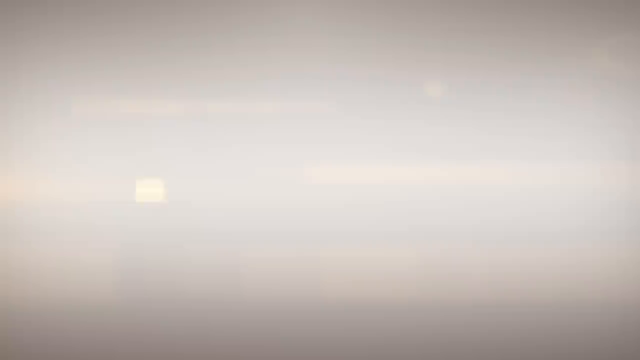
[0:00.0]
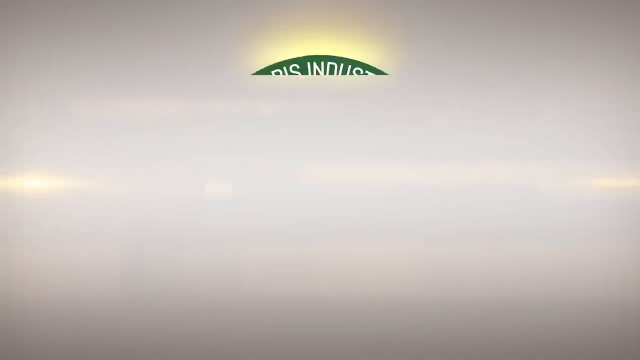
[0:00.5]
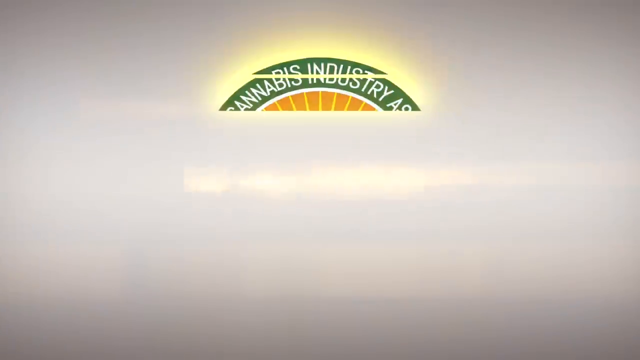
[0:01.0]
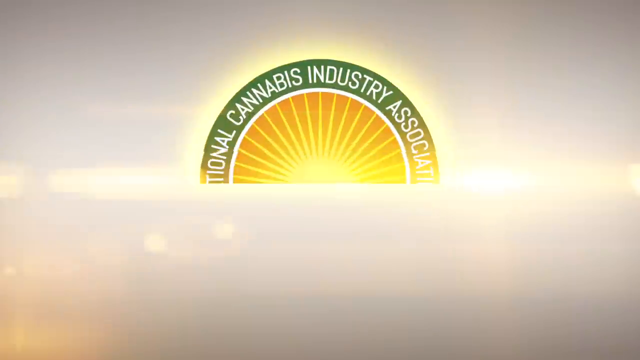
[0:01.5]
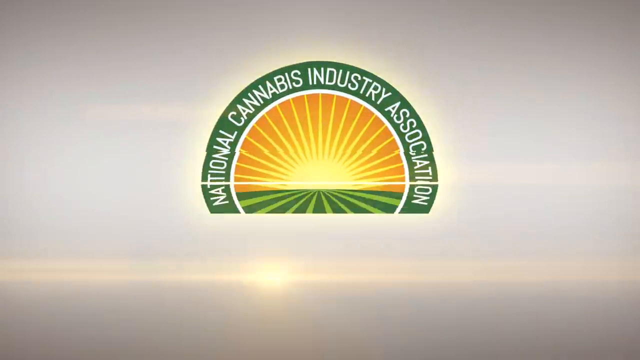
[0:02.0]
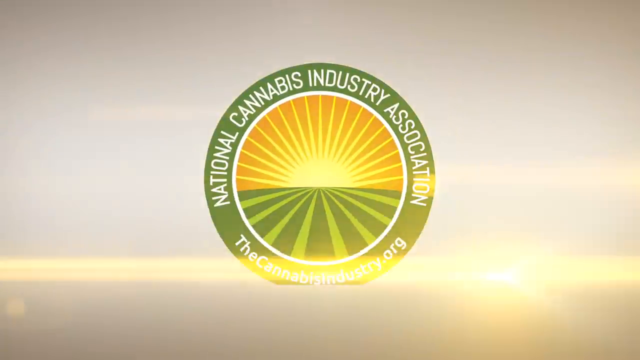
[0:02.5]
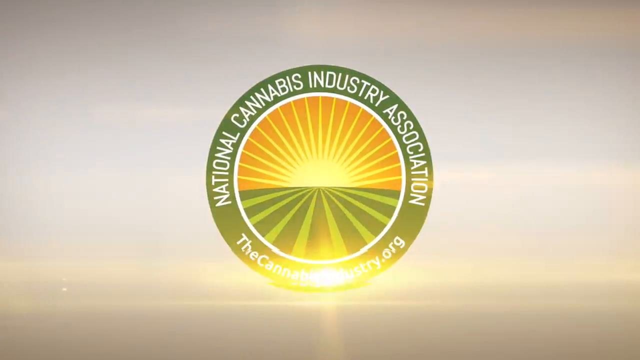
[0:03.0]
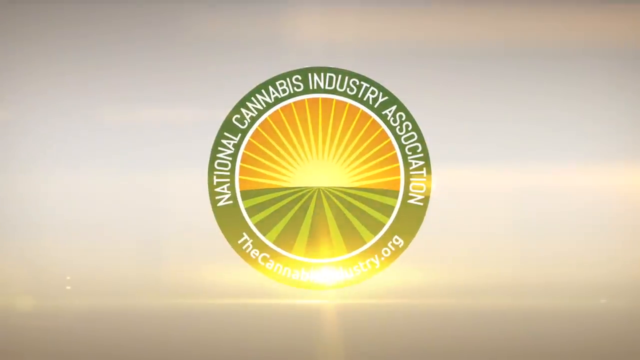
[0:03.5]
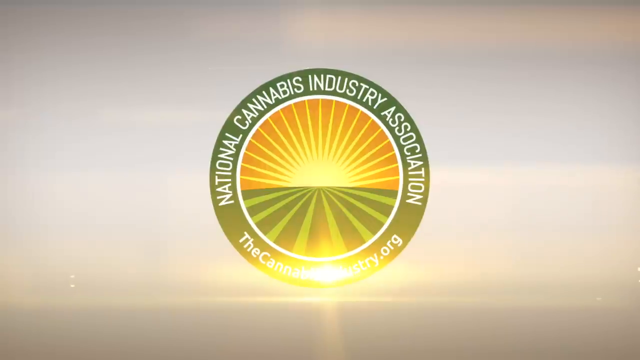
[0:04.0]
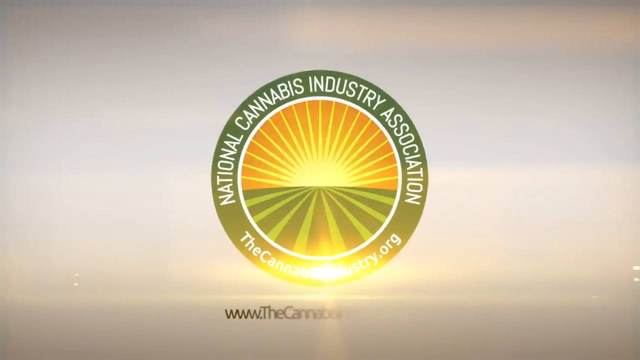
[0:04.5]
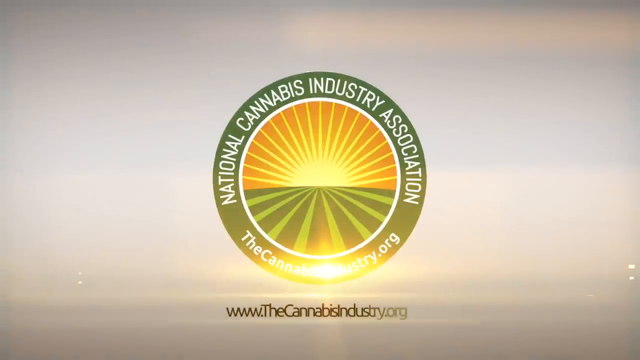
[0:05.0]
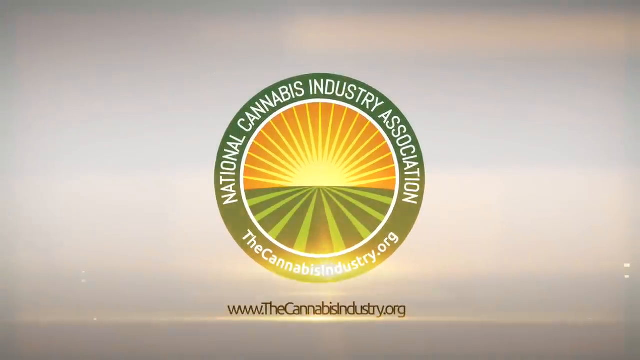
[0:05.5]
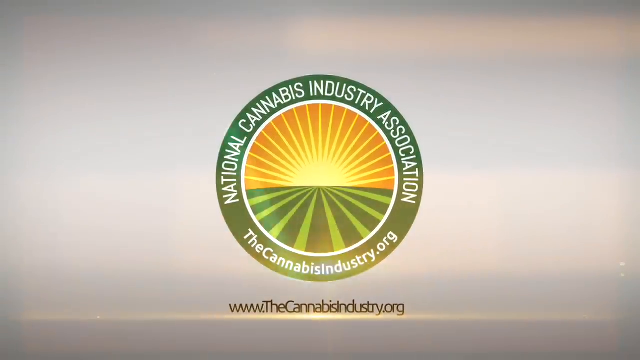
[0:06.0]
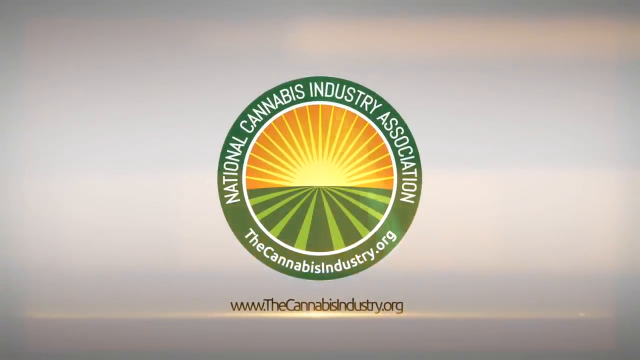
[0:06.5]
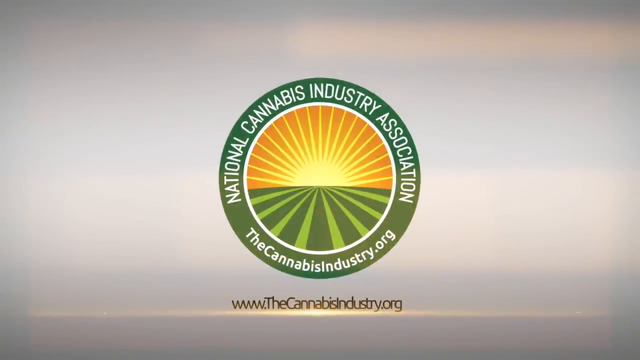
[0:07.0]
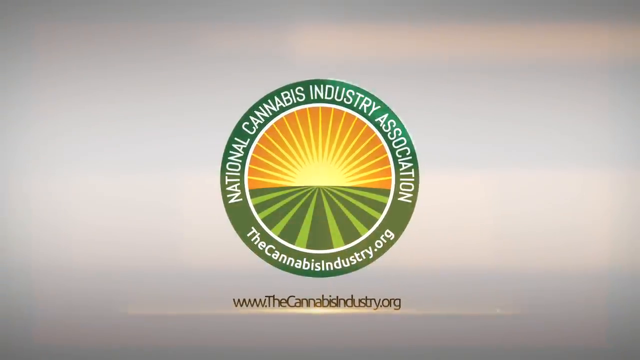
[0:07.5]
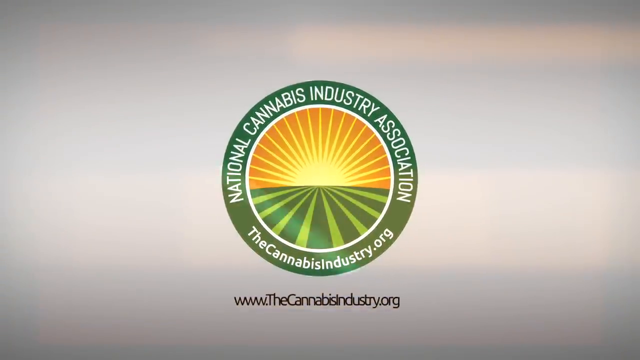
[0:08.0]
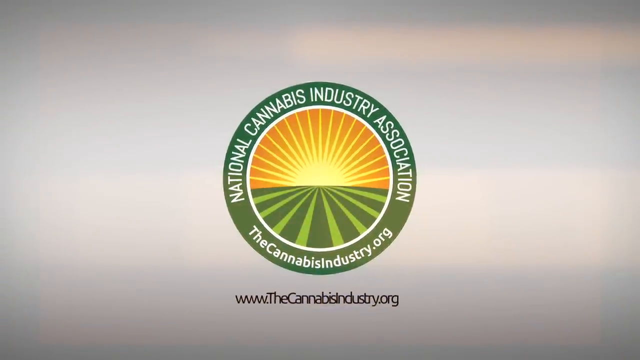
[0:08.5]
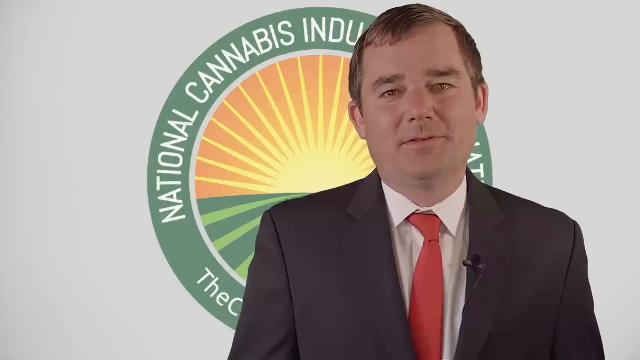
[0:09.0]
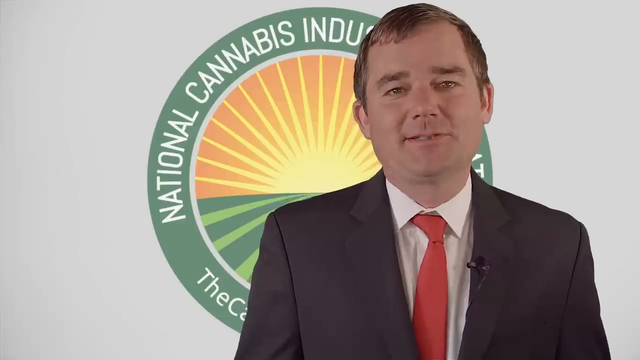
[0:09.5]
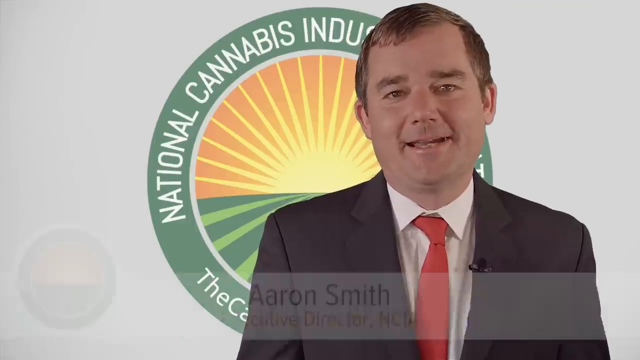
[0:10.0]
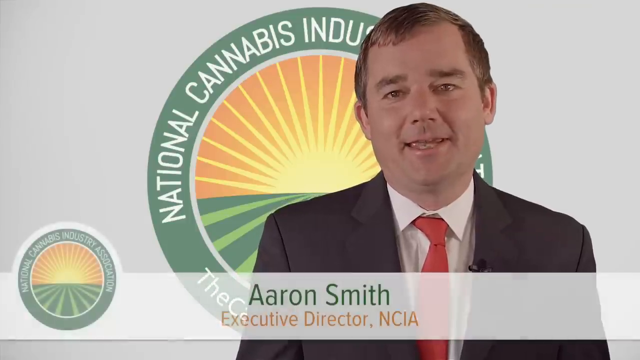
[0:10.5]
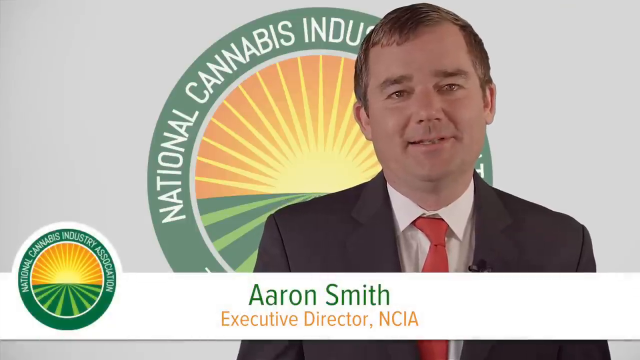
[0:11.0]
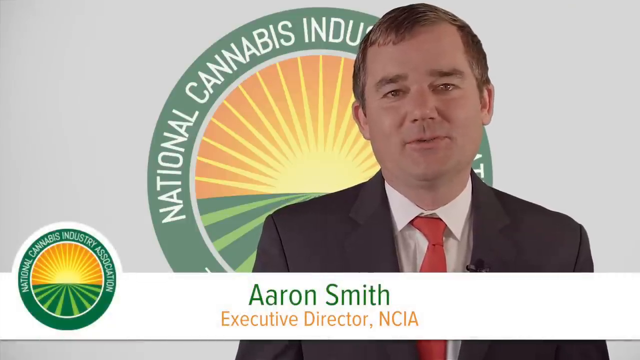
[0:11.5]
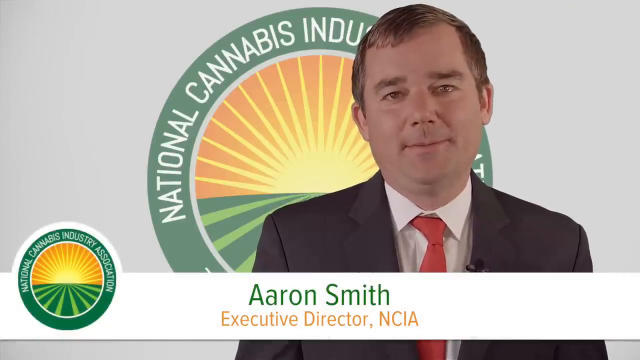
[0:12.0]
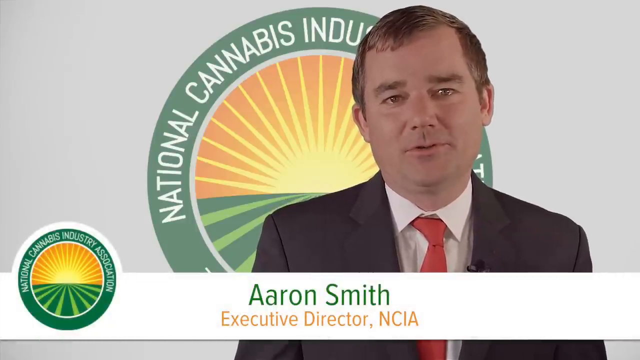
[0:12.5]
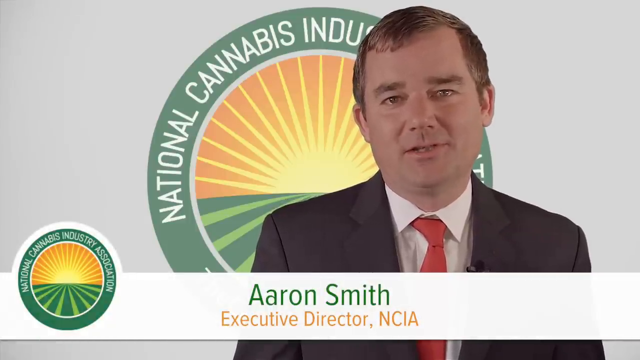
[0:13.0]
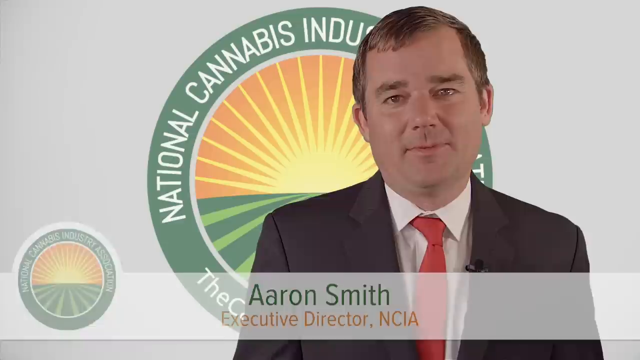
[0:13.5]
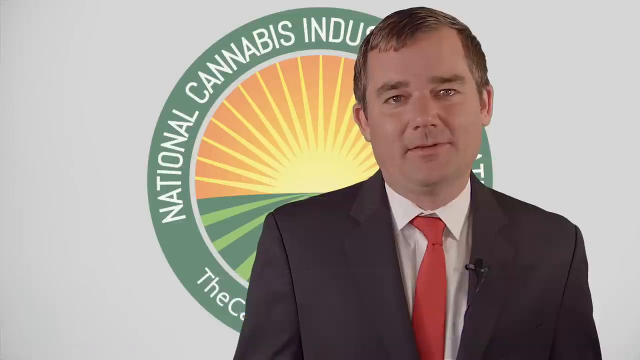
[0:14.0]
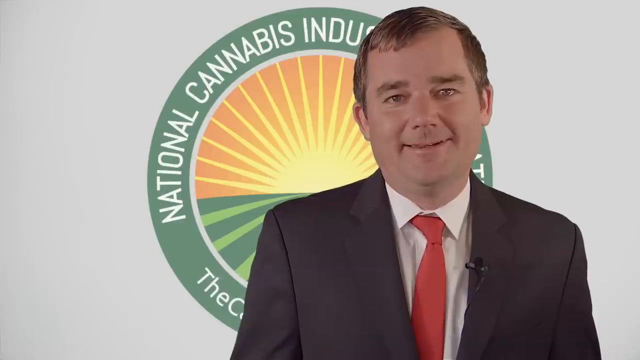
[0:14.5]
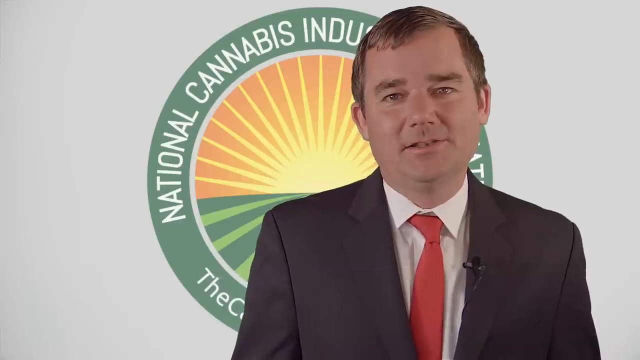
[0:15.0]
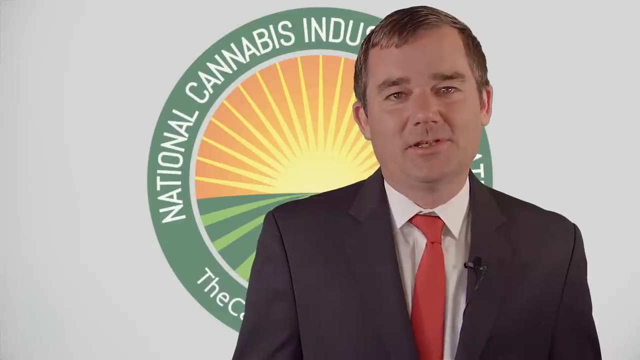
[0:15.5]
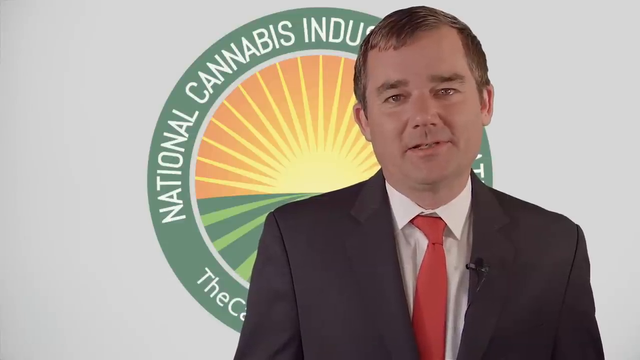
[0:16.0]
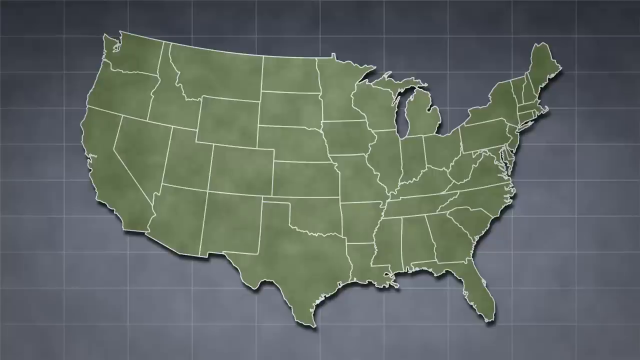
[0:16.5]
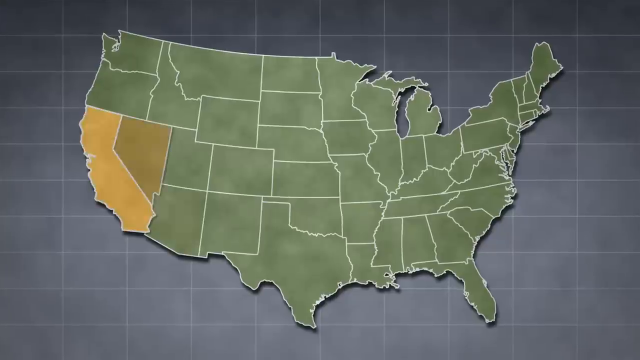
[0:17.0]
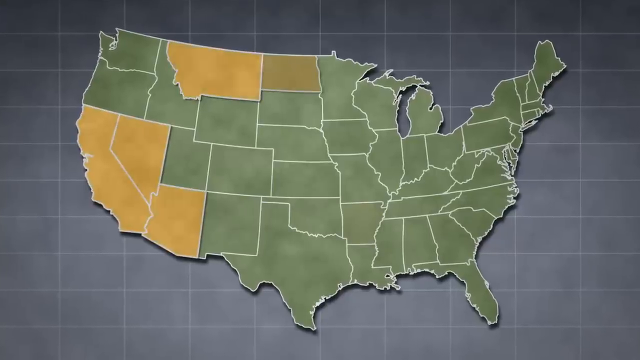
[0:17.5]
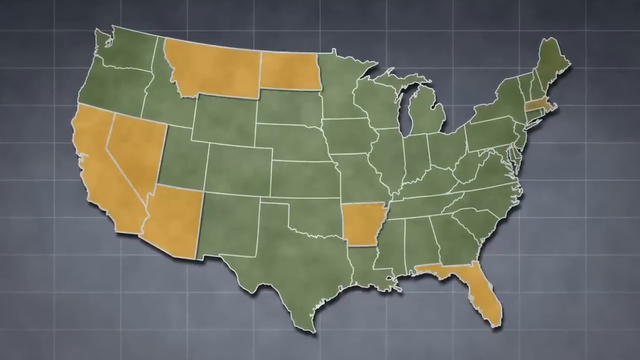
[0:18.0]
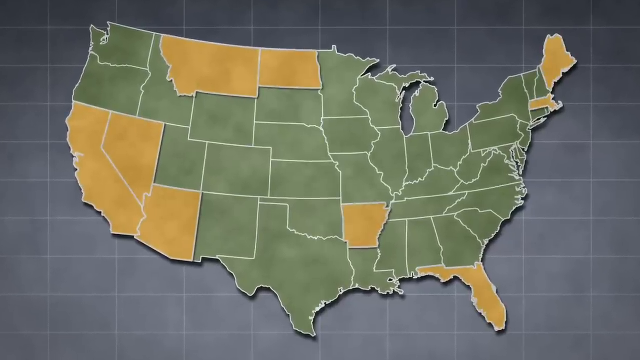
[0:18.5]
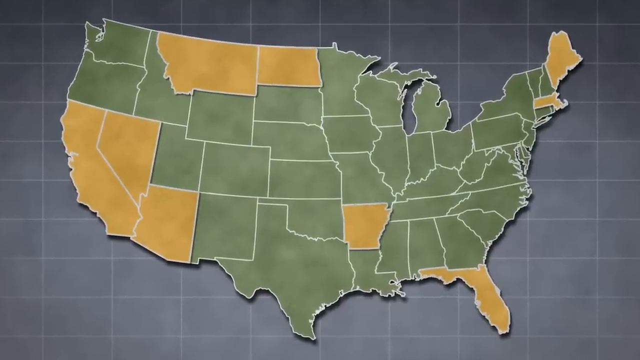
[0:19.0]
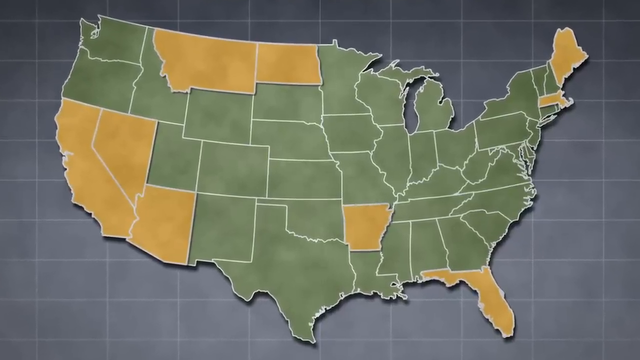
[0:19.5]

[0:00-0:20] The circular logo of the National Cannabis Industry Association appears on the screen in green, orange and some dark green. The words "National Cannabis Industry Association" are written in a semicircle across the top, and "thecannabisindustry.org" is written in the lower section of the circle. Below the logo, outside it, is written "www.thecannabisindustry.org". The logo zooms out on the screen. A man in a black suit, white shirt and red tie is then seen talking to the camera. His name, Aaron Smith, pops up on the screen, identifying him as the executive director of NCIA, the National Cannabis Industry Association. He seems to be smiling. A map of the United States follows, with some states colored yellow and the rest colored green. The map zooms in and out.